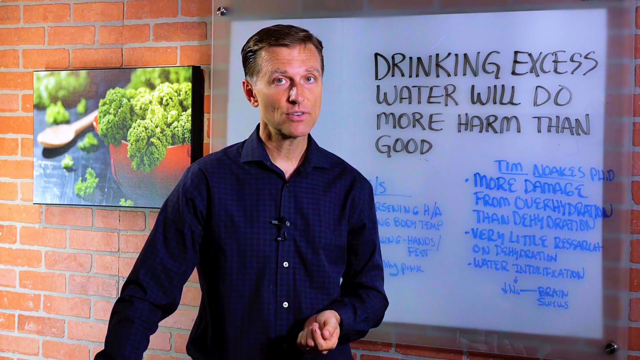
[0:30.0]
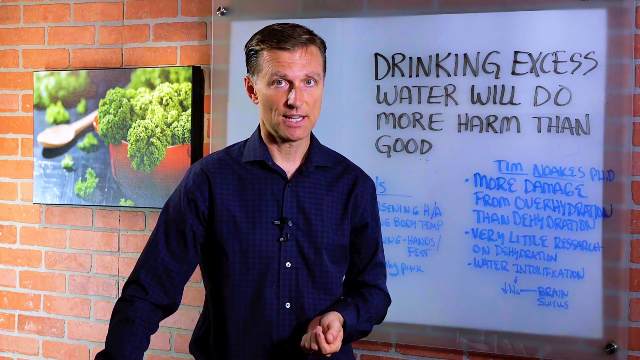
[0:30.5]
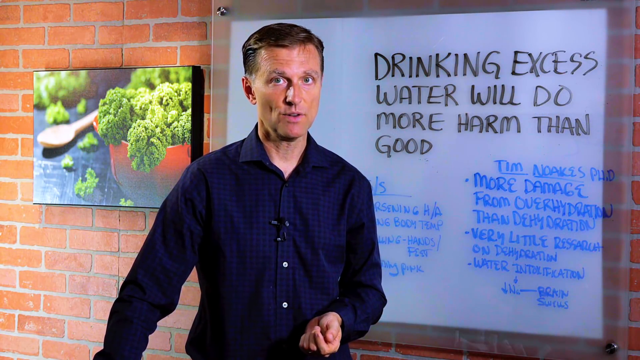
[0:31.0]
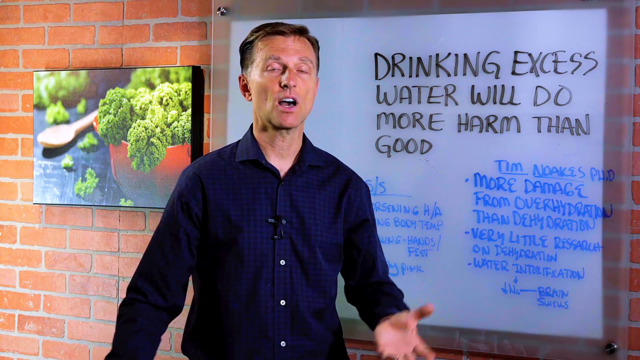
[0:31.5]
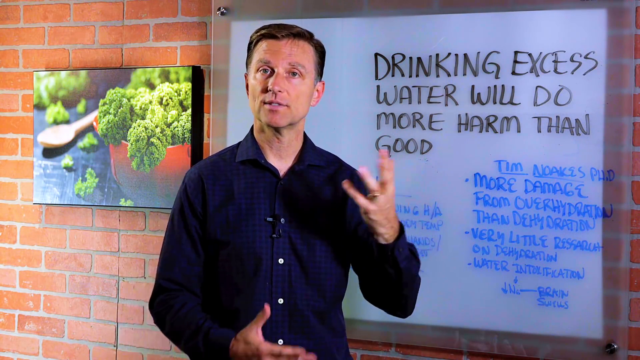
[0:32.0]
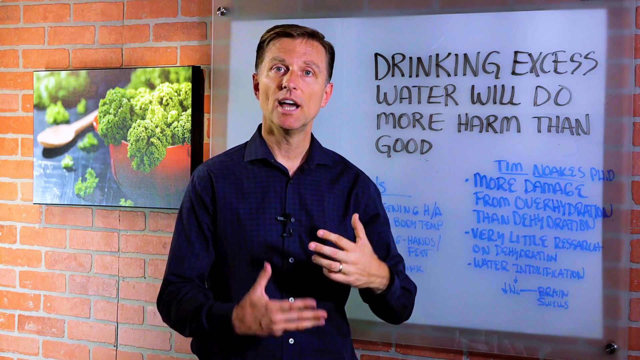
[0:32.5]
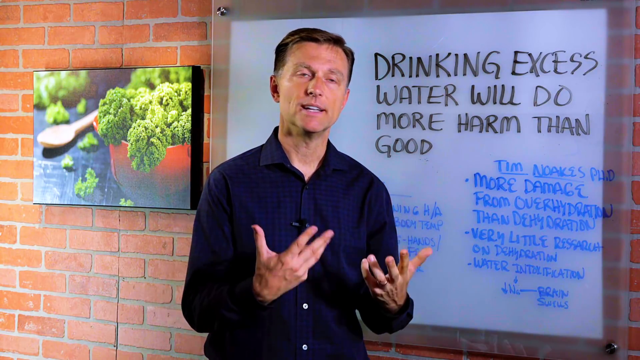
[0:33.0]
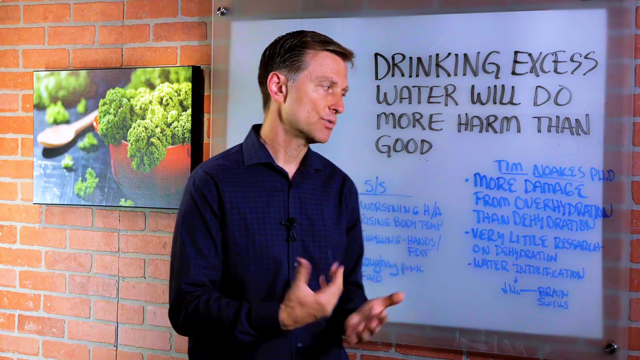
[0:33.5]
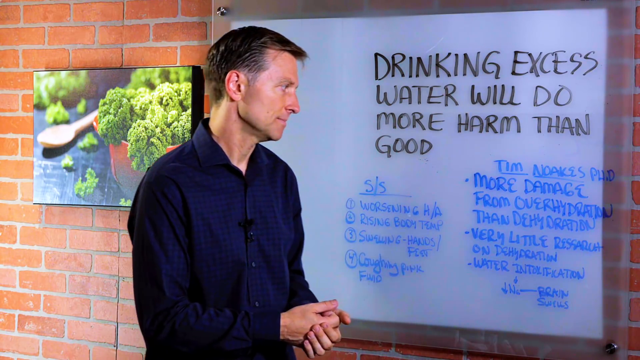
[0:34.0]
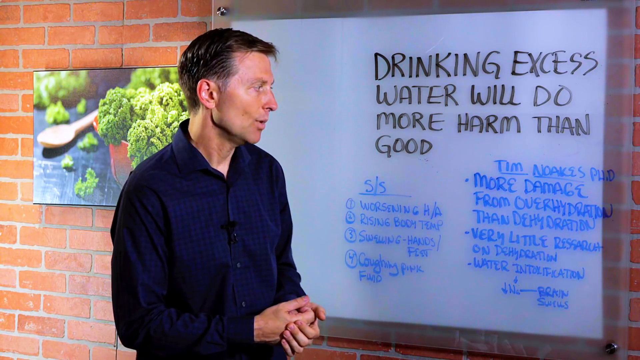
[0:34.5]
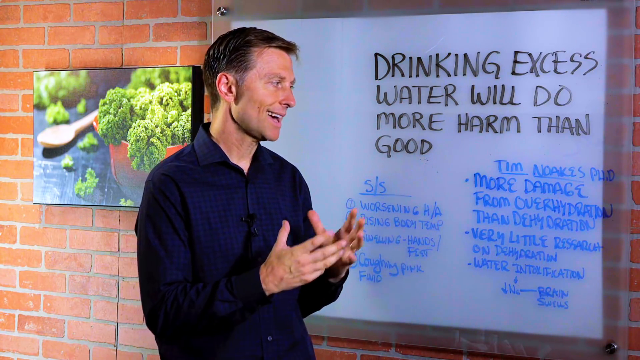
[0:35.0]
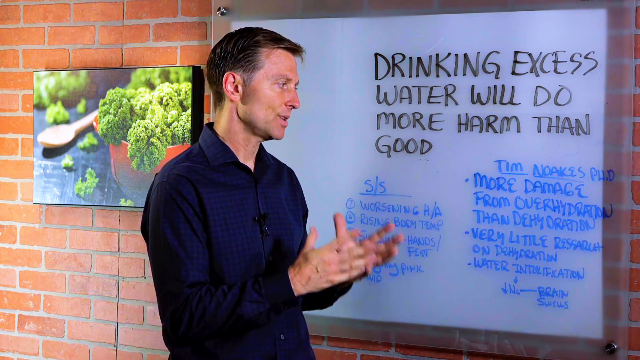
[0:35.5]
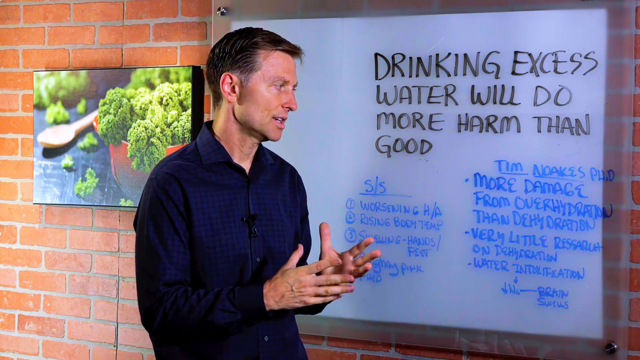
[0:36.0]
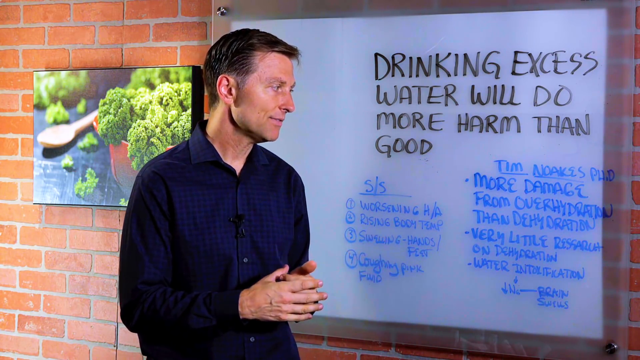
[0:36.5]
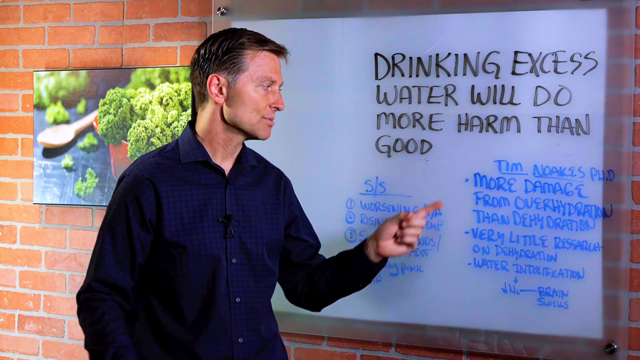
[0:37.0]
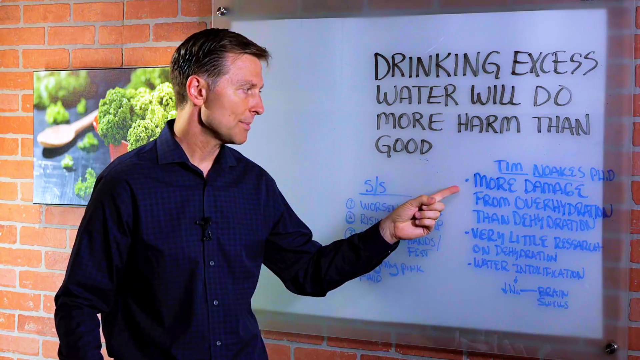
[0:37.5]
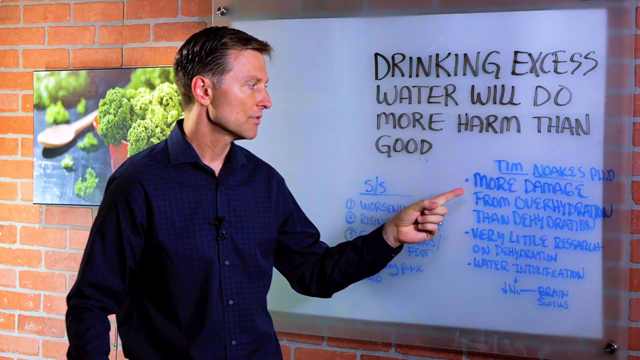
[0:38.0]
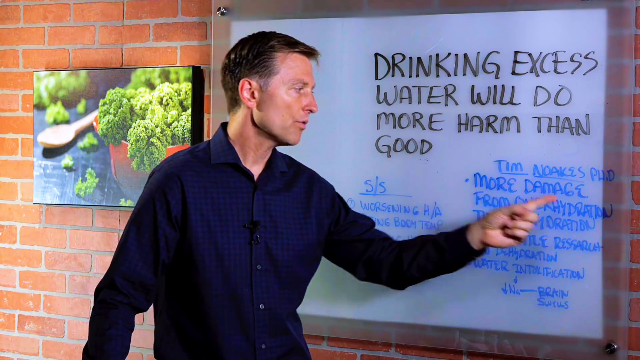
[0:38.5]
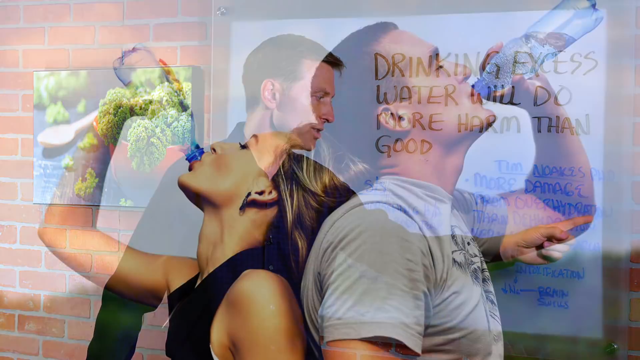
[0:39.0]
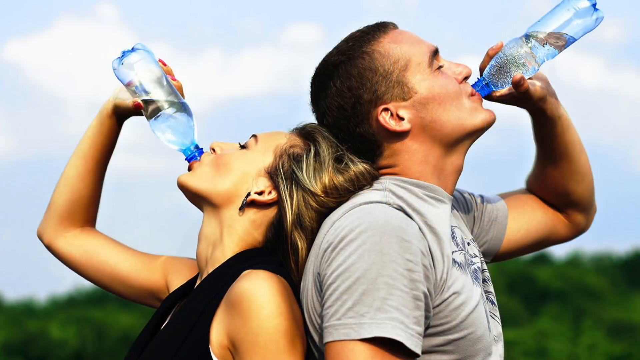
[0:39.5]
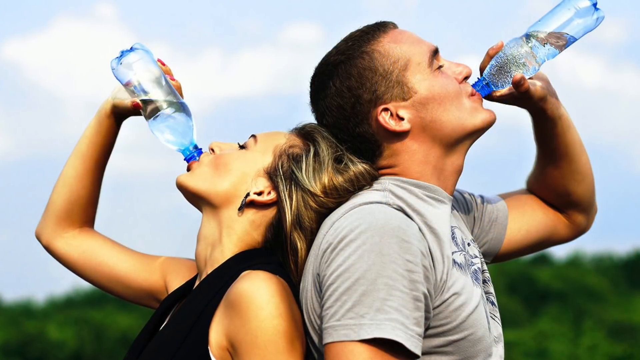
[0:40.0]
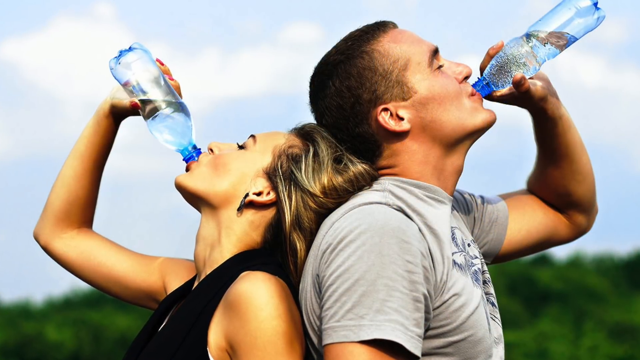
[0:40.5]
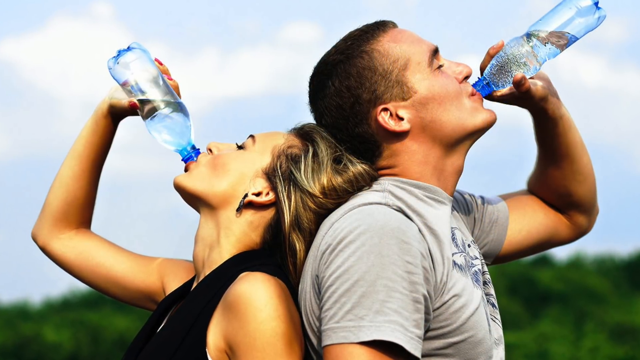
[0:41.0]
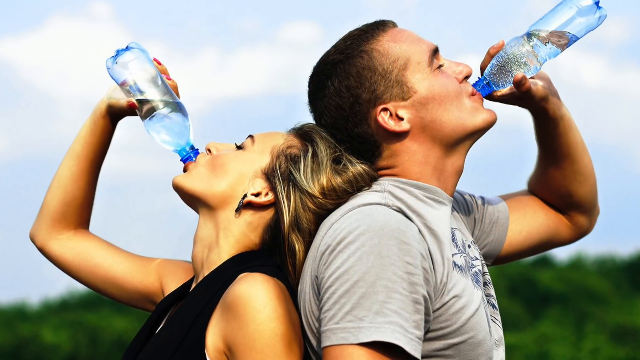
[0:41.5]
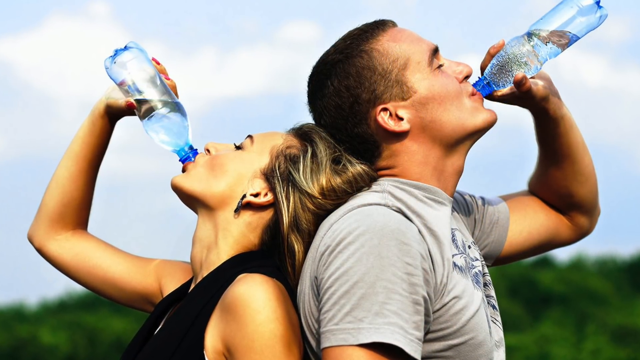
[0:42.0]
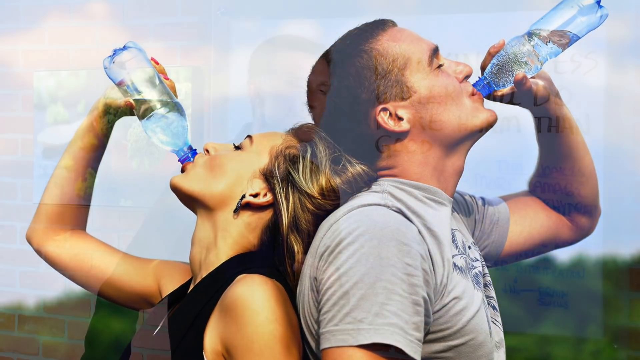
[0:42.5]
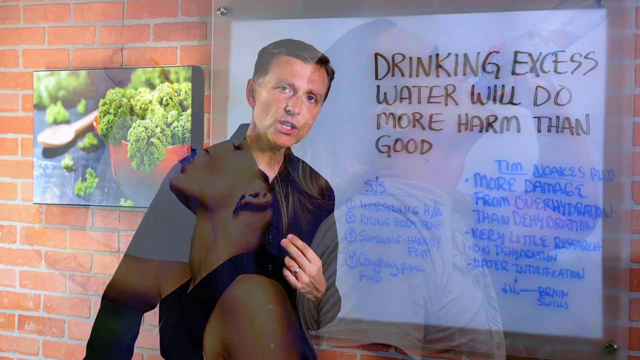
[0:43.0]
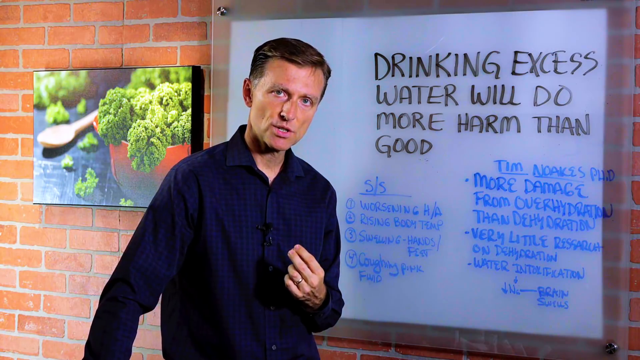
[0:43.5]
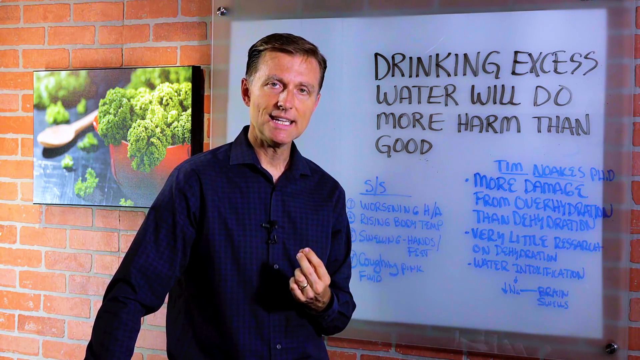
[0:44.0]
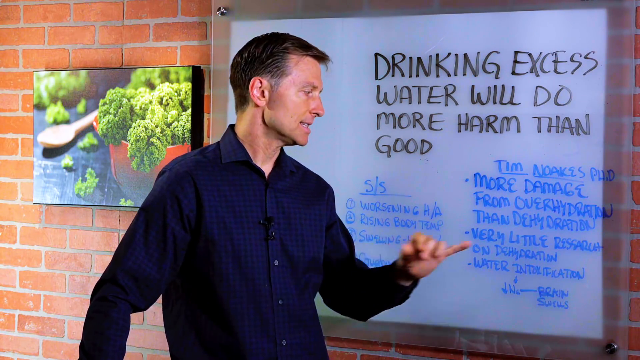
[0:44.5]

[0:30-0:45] The man continues going over the points on the whiteboard behind him. He points to the first point in the second column, which says "more damage from overhydration." The scene switches to a still photo of a young man and woman outdoors, standing back-to-back. The woman wears a black sleeveless shirt, and the man wears a short-sleeve gray shirt with some kind of black graphic design on the front. Both lean their heads back, kind of leaning on each other, as they tilt their heads back and drink from water bottles with no labels. In the background are a clear blue sky and the tops of some leaves. The video returns to the man in front of the whiteboard, now pointing to the second point, which looks like it says "very little ressarut," as he moves on to the next point.